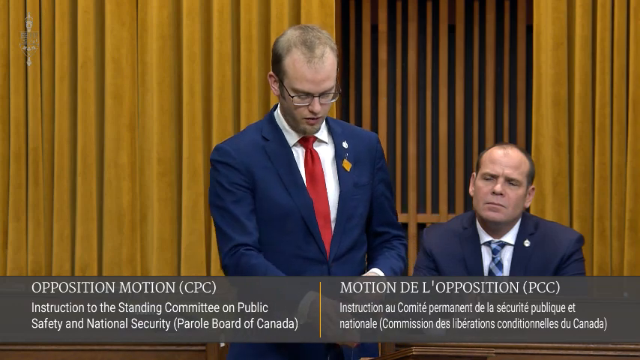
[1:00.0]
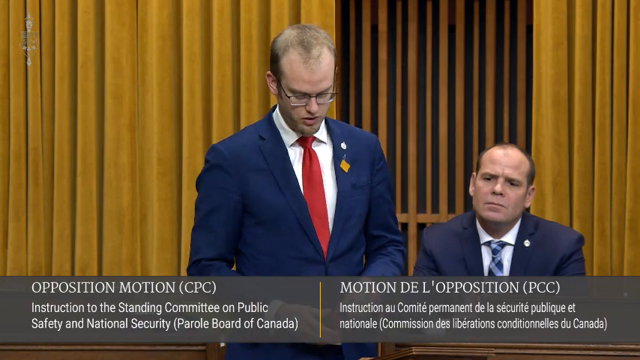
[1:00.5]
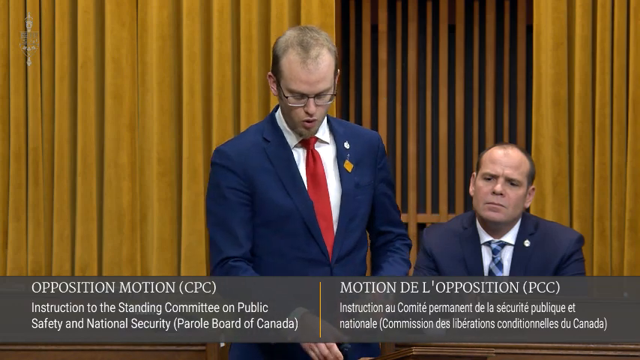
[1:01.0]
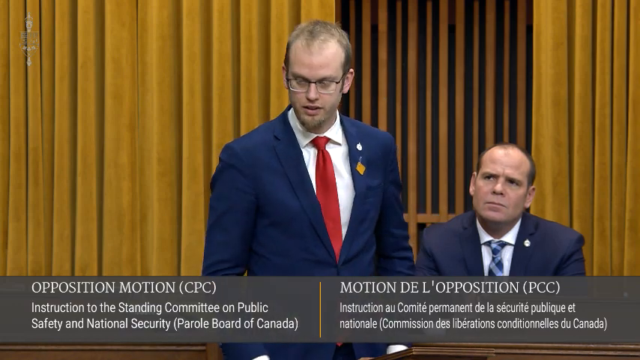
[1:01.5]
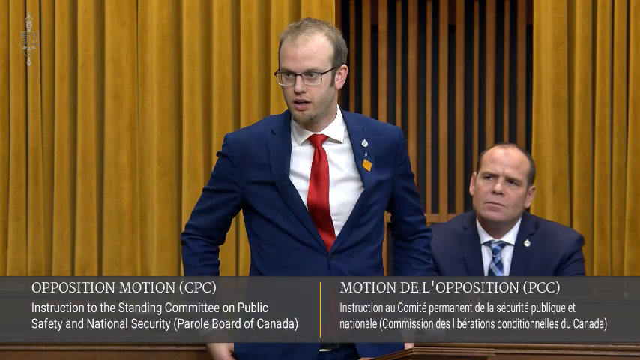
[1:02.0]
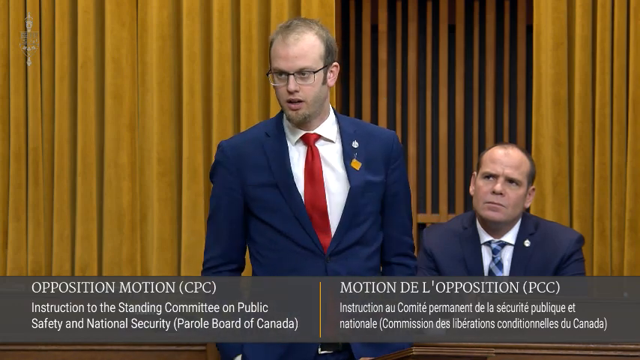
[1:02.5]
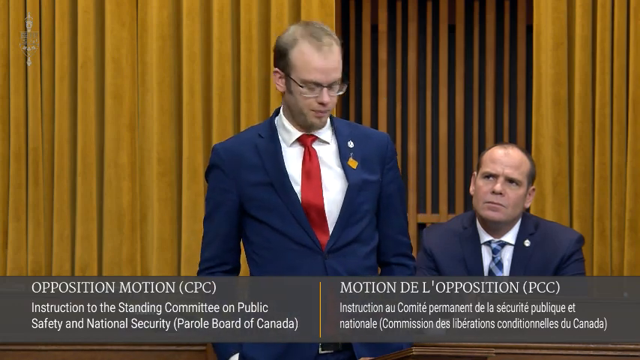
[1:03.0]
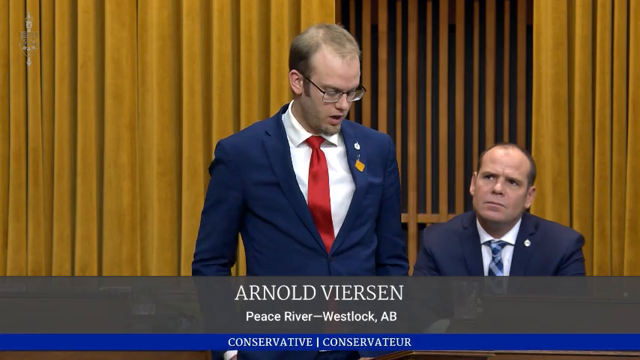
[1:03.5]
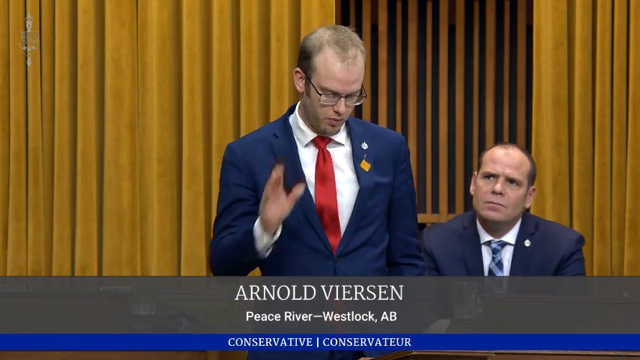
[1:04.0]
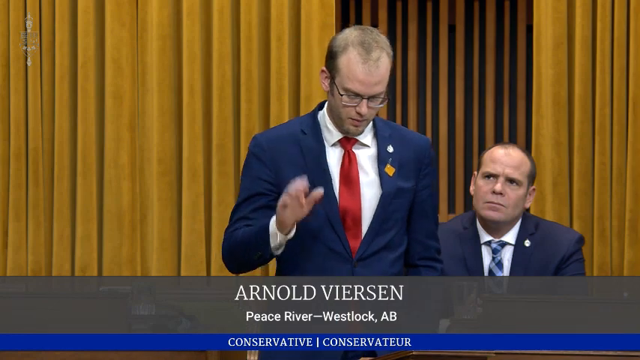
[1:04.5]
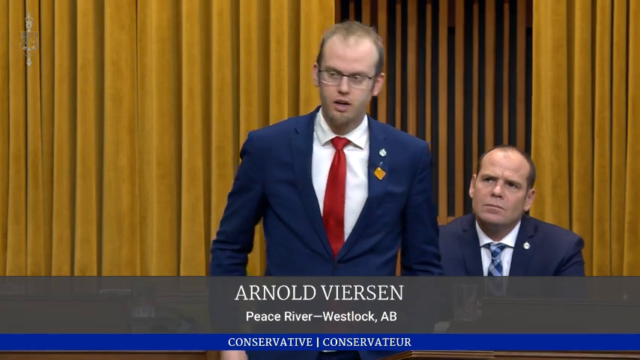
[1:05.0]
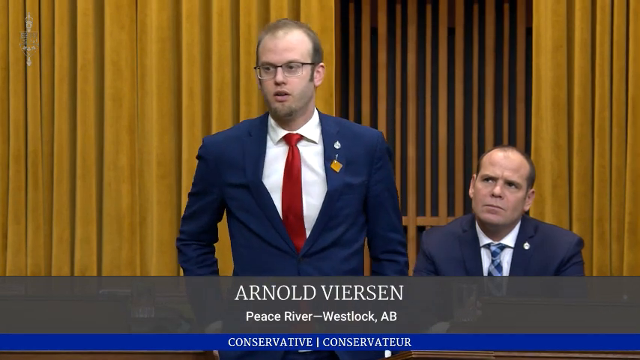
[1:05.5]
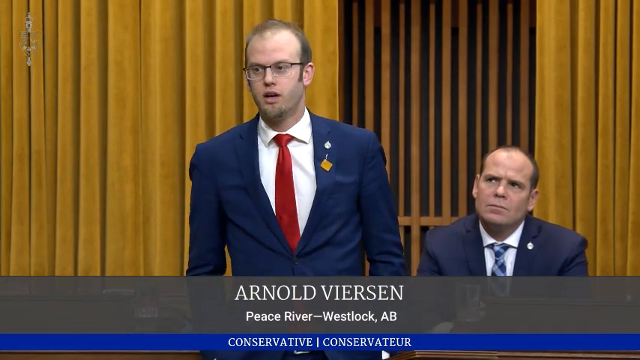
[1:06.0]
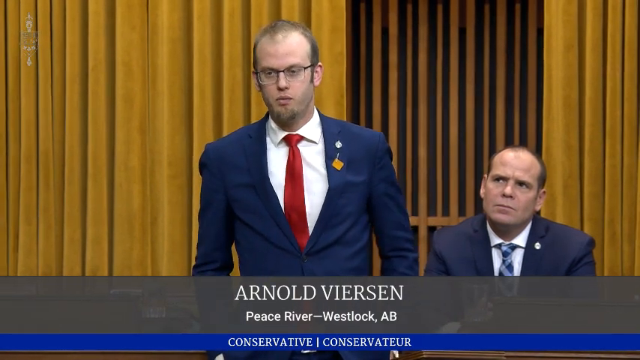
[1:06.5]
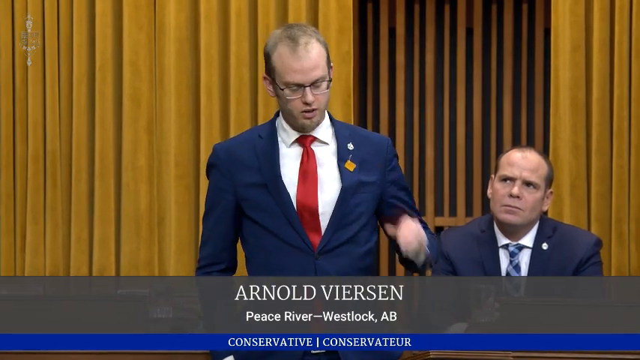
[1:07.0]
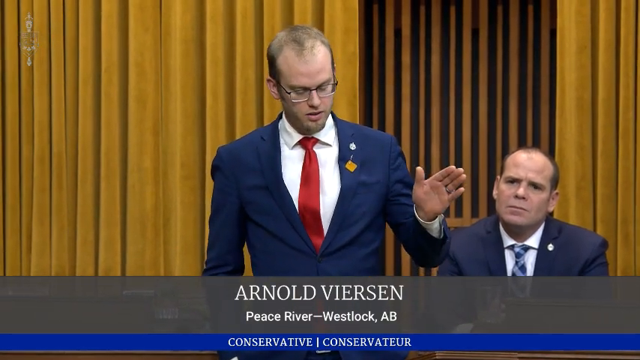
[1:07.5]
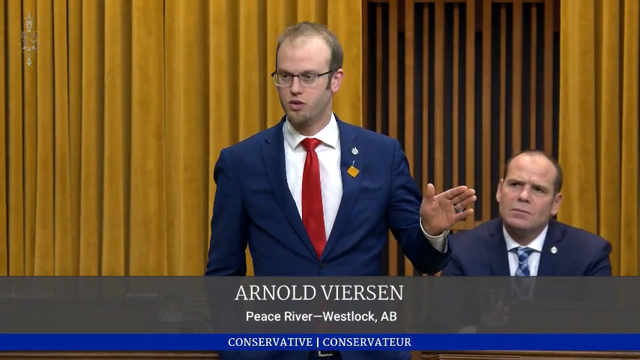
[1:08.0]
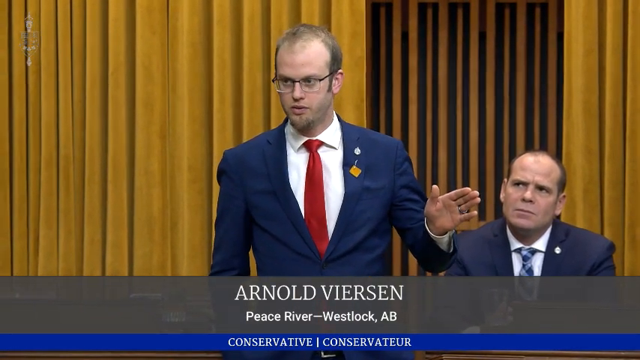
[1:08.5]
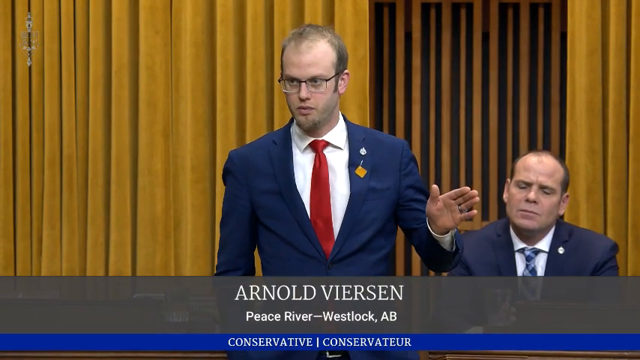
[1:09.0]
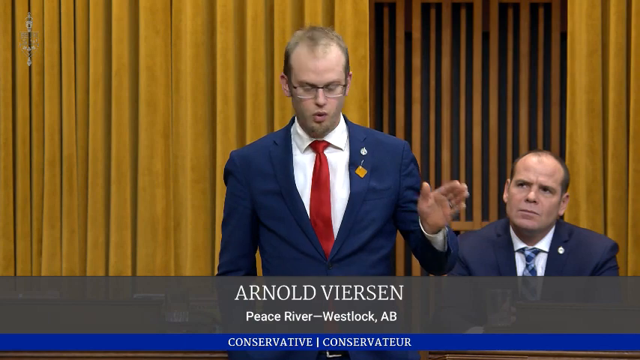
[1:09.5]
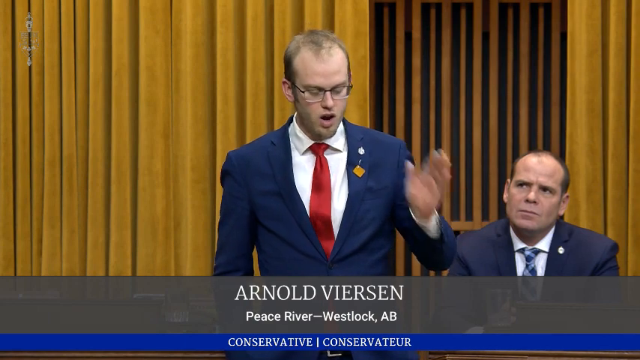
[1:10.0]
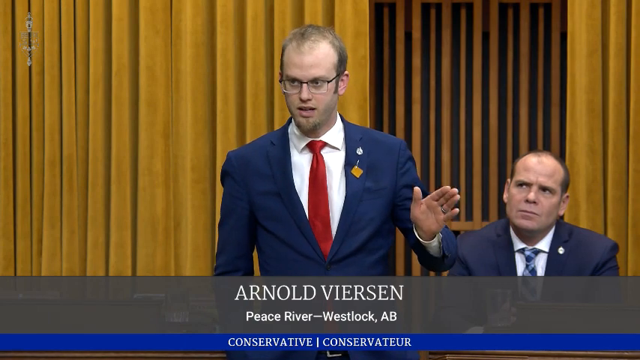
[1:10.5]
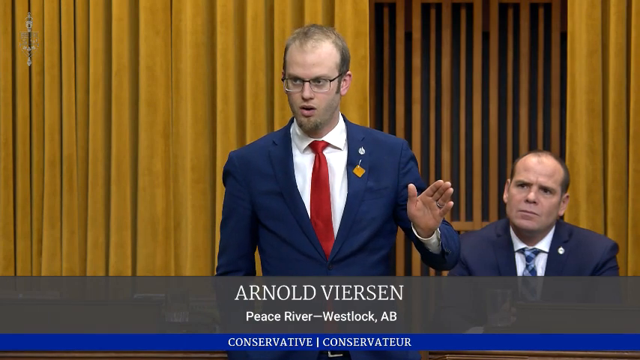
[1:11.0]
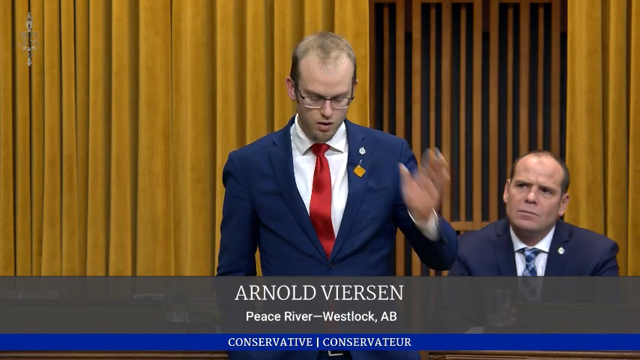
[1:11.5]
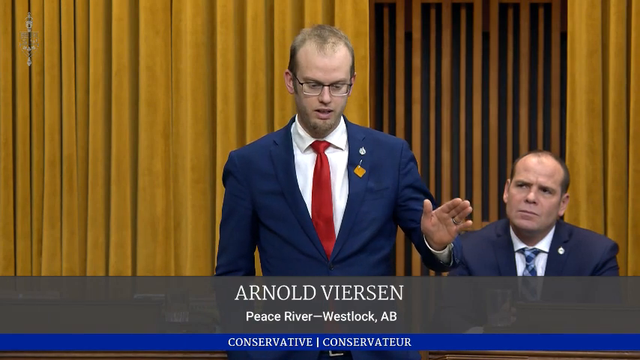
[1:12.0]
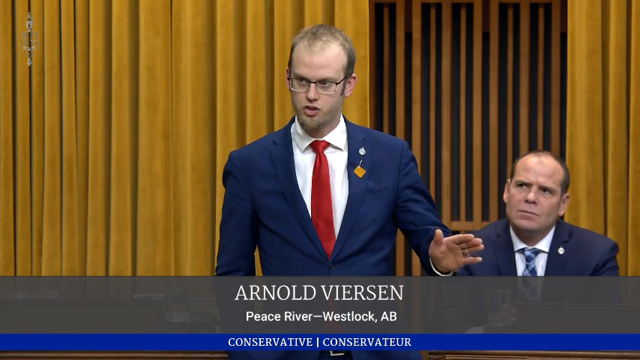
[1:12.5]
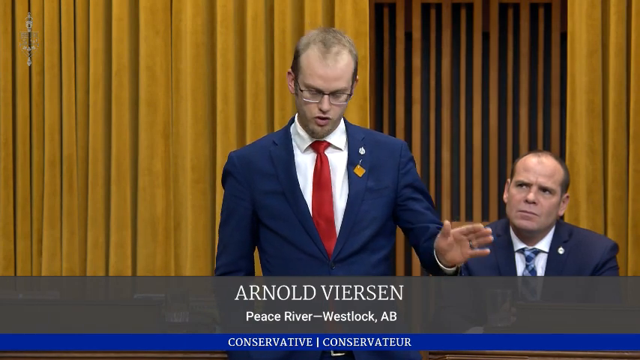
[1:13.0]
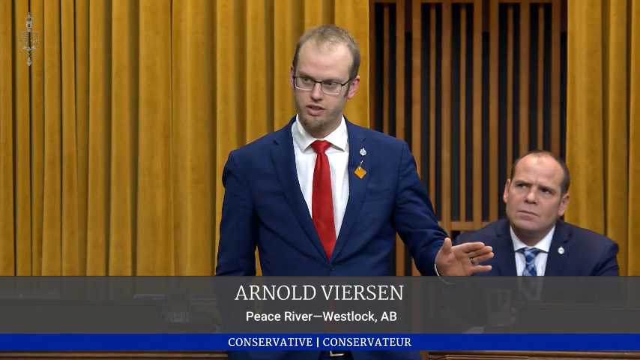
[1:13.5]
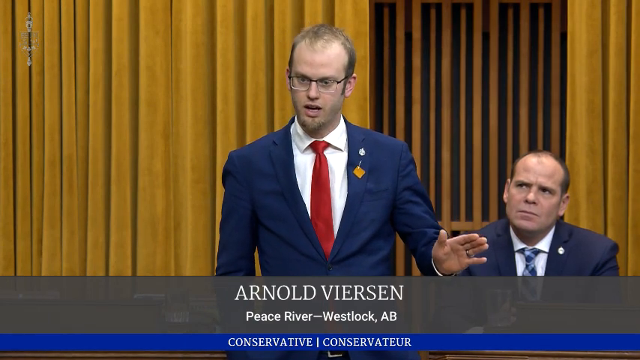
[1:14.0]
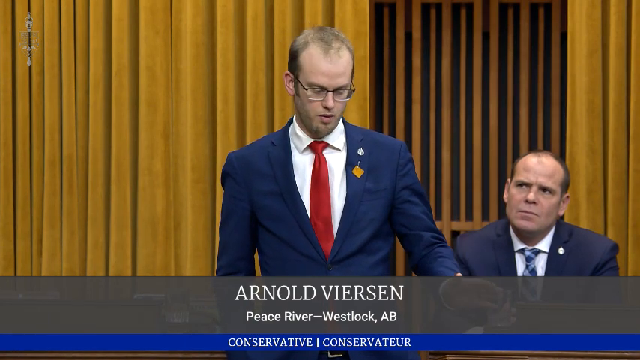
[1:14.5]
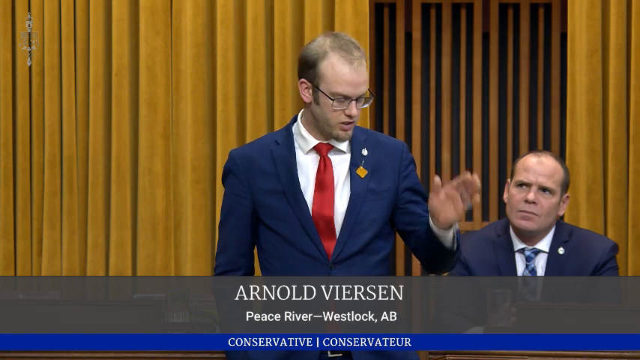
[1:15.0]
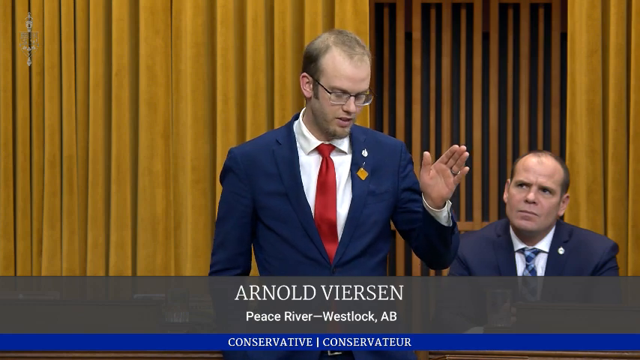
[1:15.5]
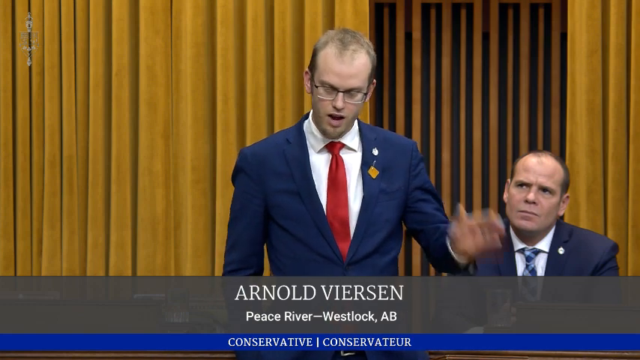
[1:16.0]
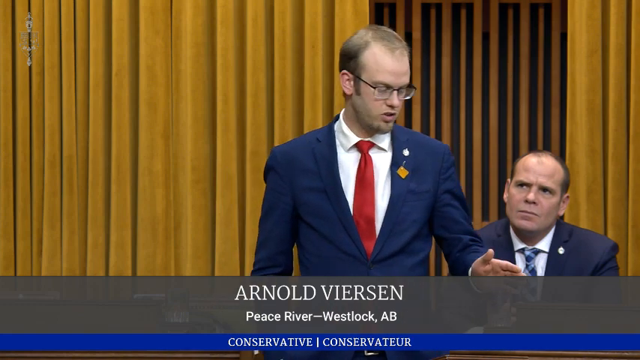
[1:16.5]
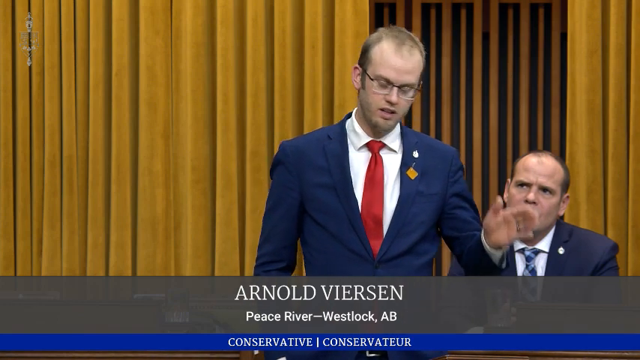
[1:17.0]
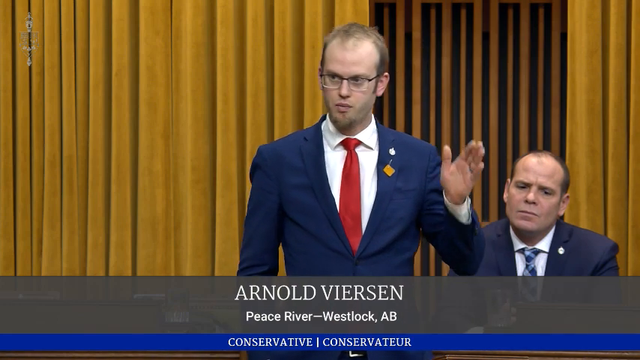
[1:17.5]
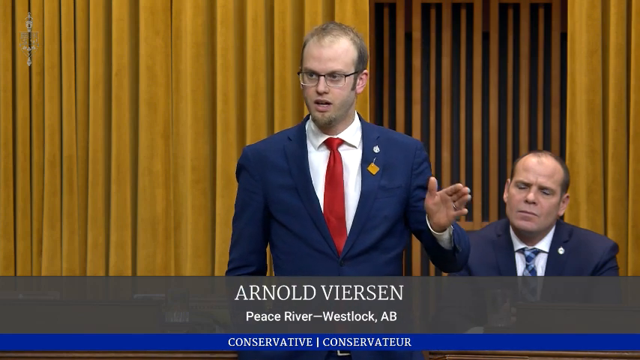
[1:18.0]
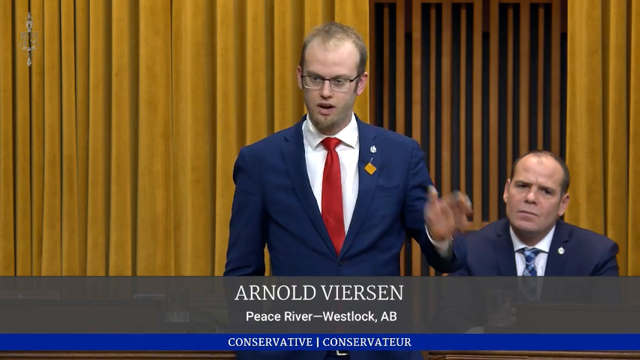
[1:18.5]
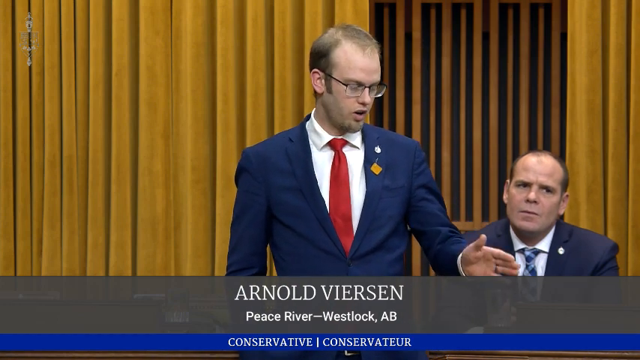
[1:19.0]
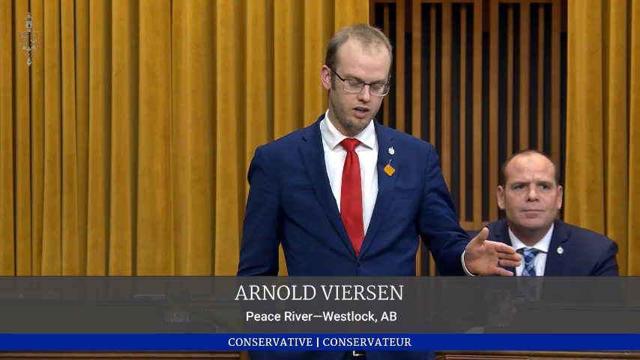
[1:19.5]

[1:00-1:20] Two Caucasian men, one standing and one sitting, are in front of a wall that looks to have brown detail and some sort of gold curtain. The standing man wears glasses, a blue suit with a white undershirt and a red tie, and some sort of pin on his left side. While he speaks, a blackish-gray banner at the bottom of the screen shows white text reading "Arnold Versen" and then "Peace River Westlock AB". He holds his hand up as he speaks. On the right side of the screen from the standing man is a man in a black suit with a white undershirt and a blue patterned tie, whose facial expressions look focused and attentive but maybe slightly confused or unsure. The banner remains at the bottom of the screen.